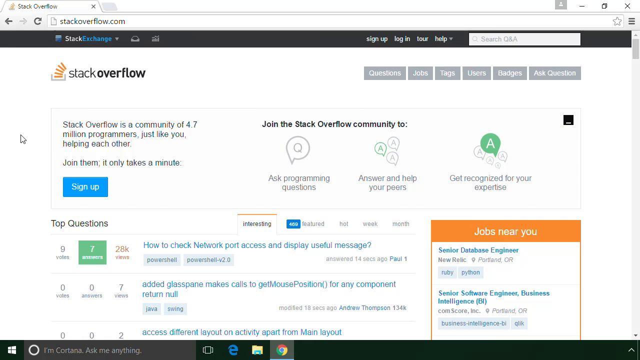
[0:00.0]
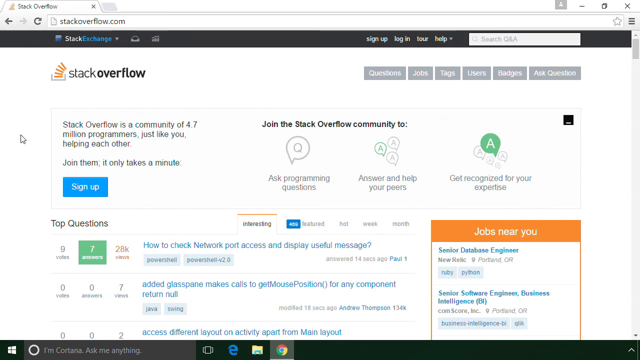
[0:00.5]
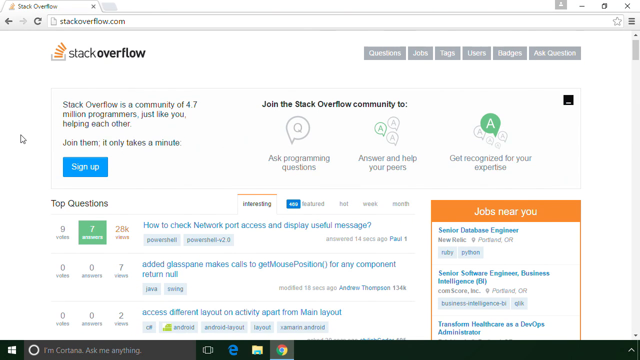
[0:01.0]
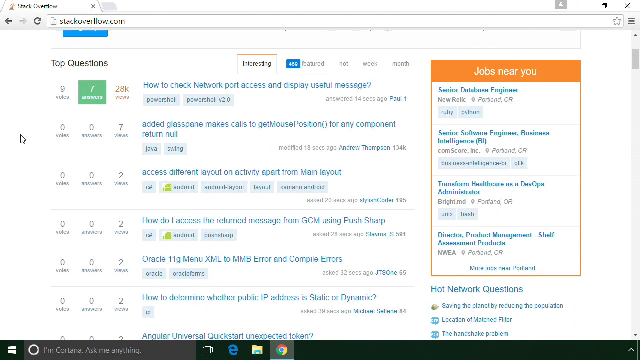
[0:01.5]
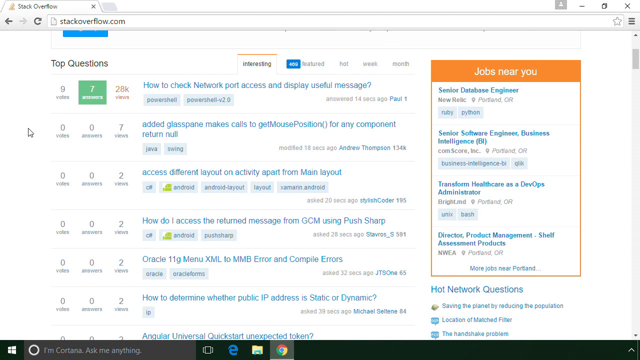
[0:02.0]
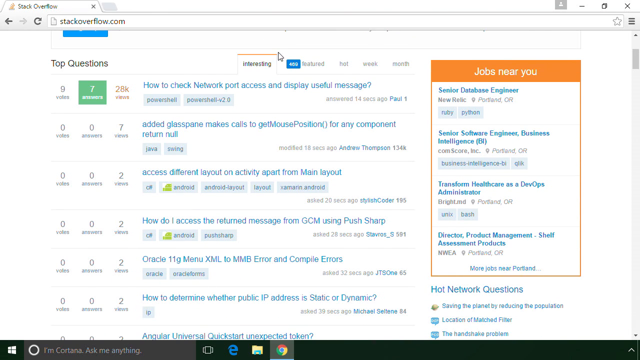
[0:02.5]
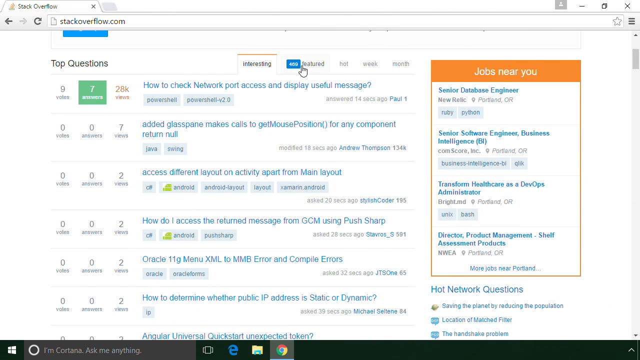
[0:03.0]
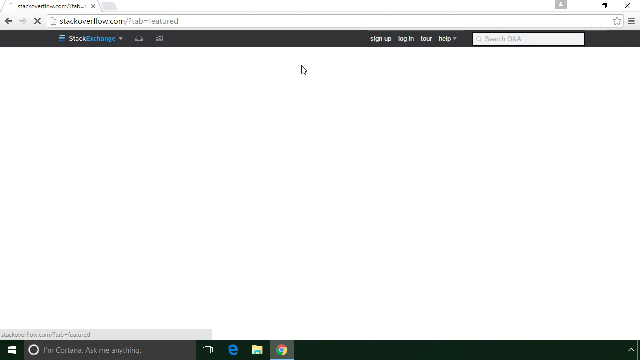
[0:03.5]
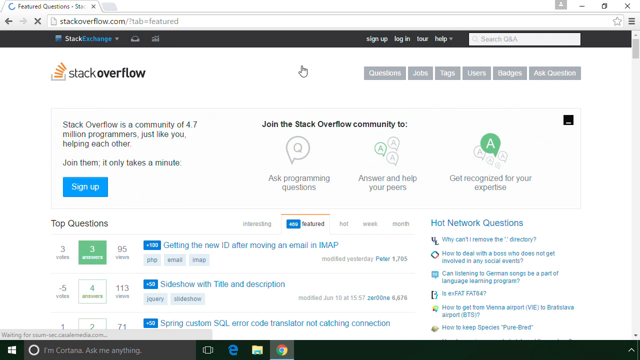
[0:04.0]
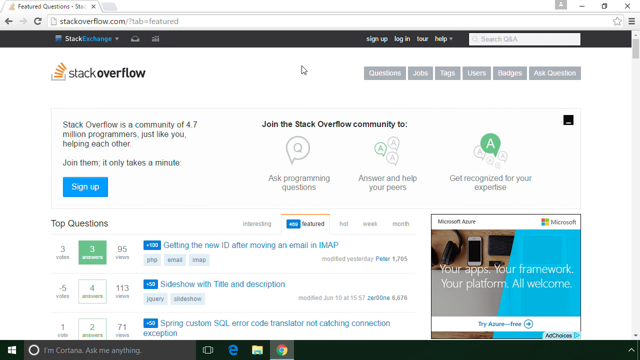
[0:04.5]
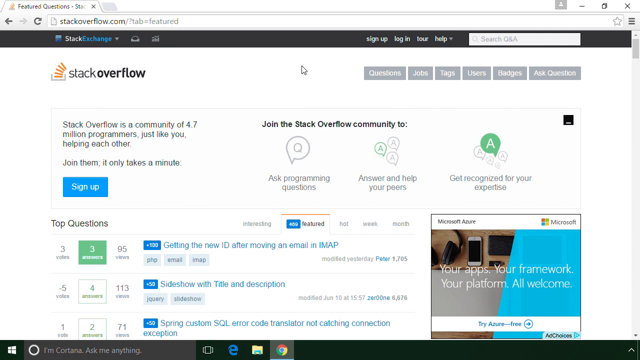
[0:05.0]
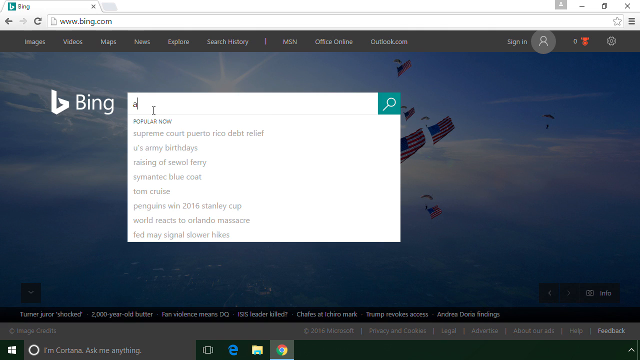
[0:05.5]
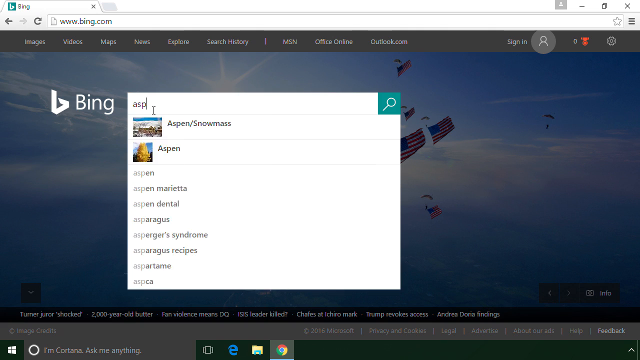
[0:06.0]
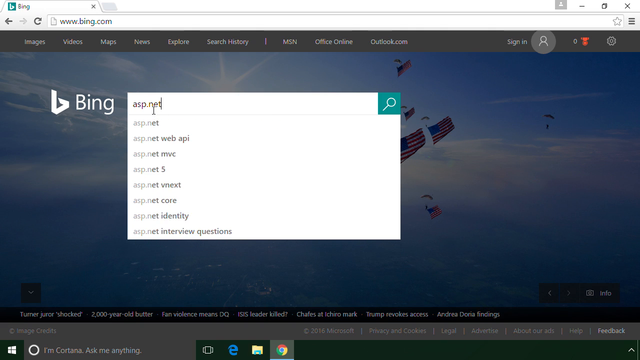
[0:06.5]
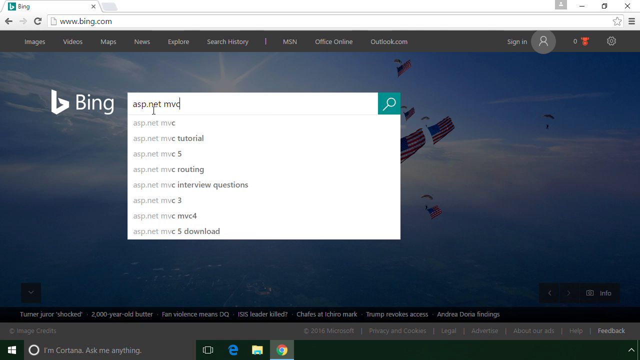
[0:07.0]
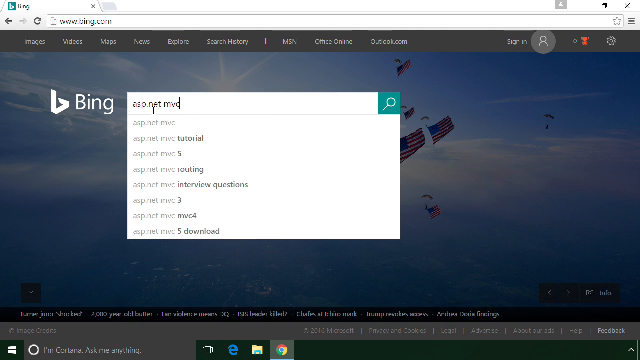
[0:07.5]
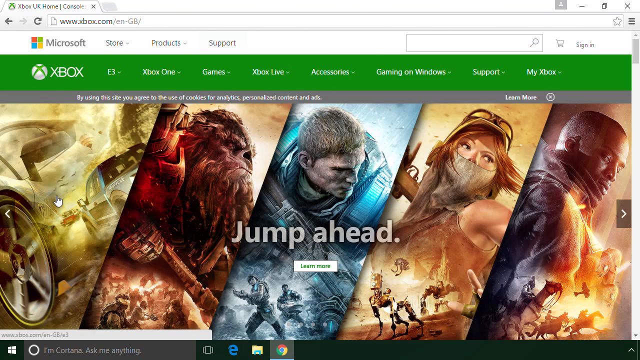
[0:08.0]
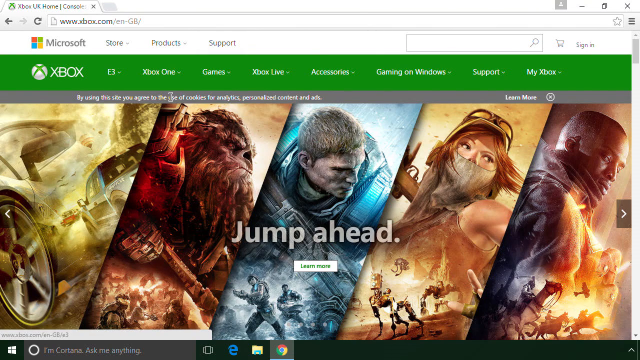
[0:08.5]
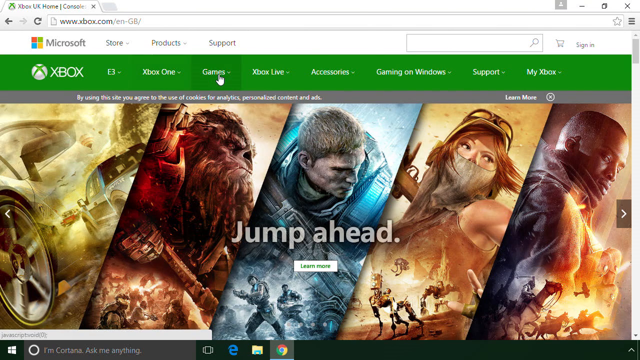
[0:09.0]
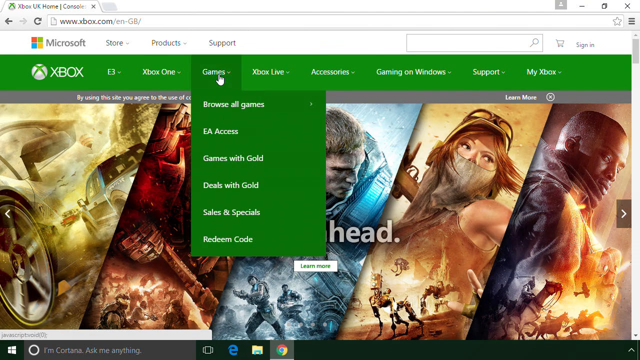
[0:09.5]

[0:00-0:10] The video concerns a platform called Stackflow Overflow. A search is typed into Bing, leading to the site, and a sign-up step is shown. The page scrolls, and there is a "jobs near you" section. The view then goes to a page with Bing again, where the search is typed once more, and then to games. The Stackflow Overflow / Stack Exchange site is shown, with an invitation to join the Stackflow Overflow community.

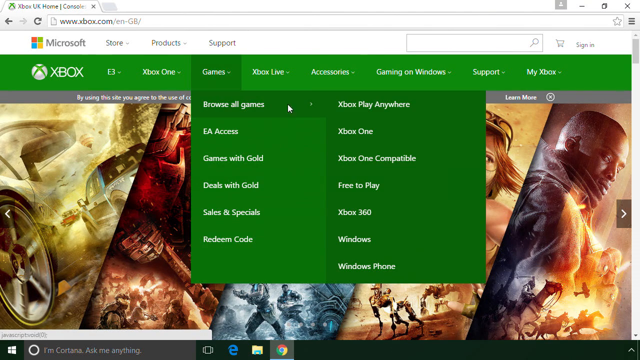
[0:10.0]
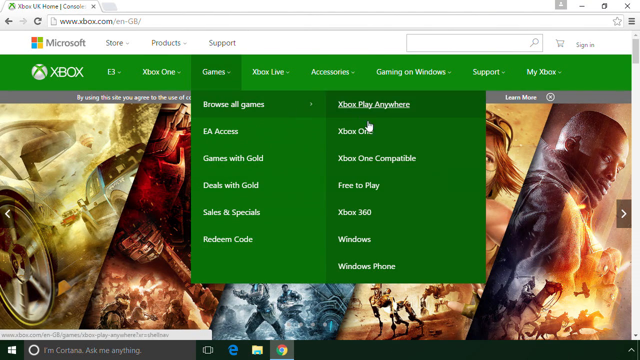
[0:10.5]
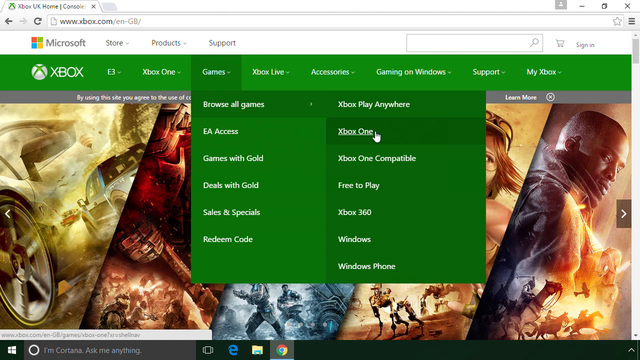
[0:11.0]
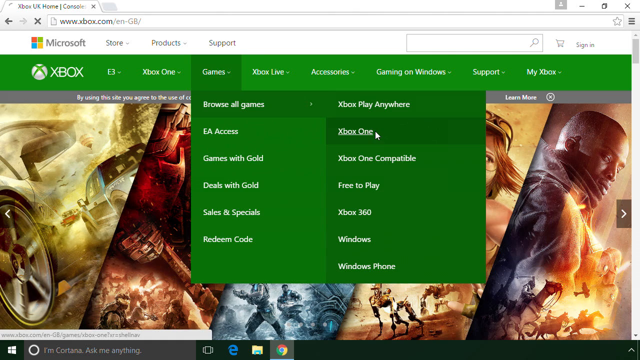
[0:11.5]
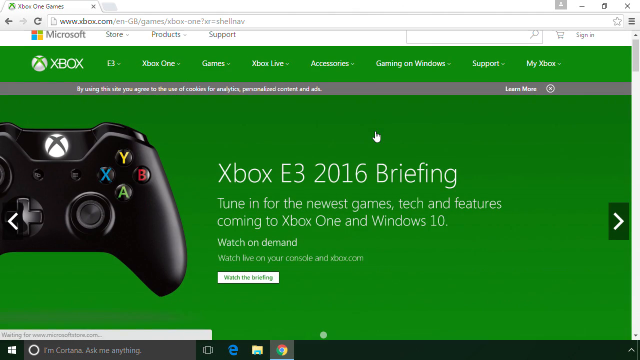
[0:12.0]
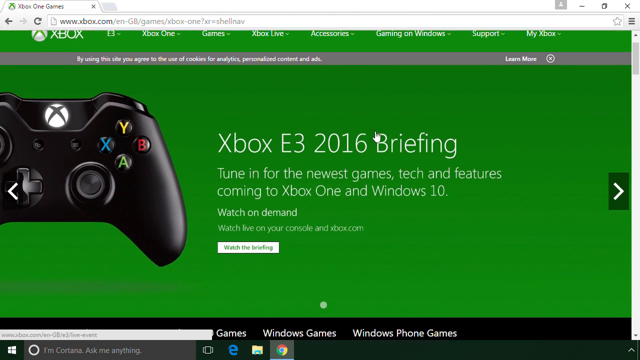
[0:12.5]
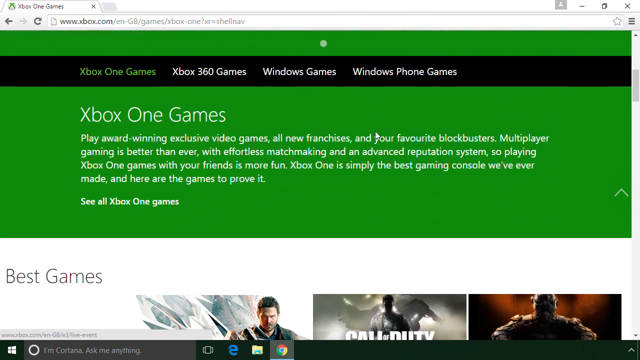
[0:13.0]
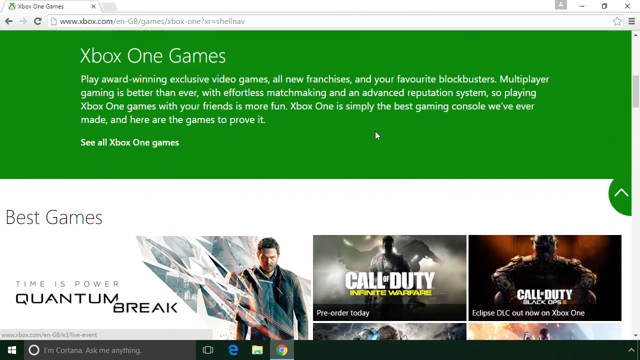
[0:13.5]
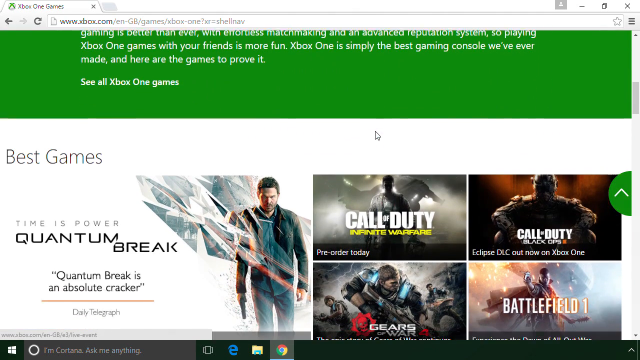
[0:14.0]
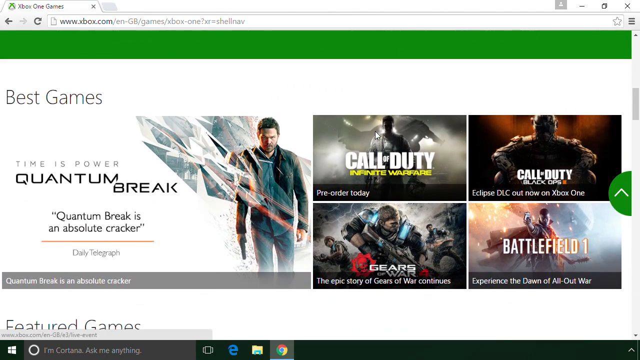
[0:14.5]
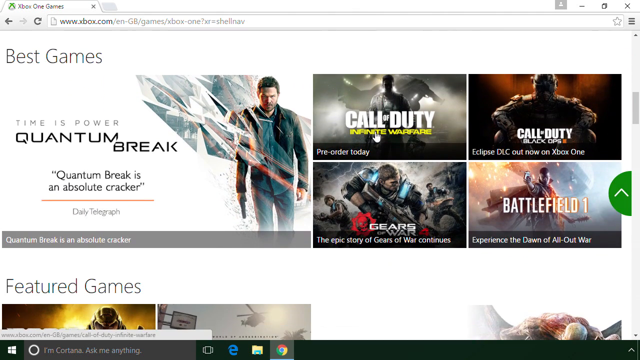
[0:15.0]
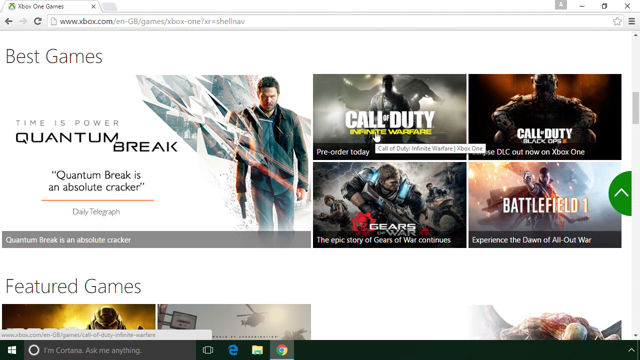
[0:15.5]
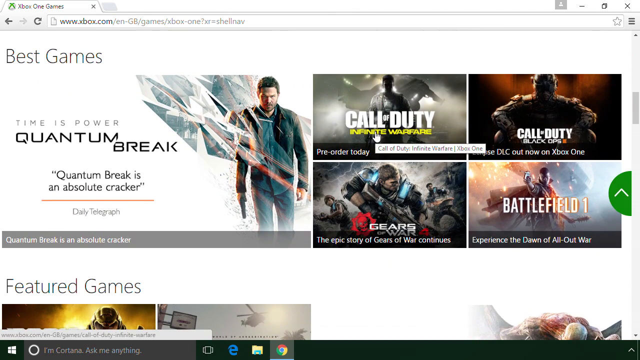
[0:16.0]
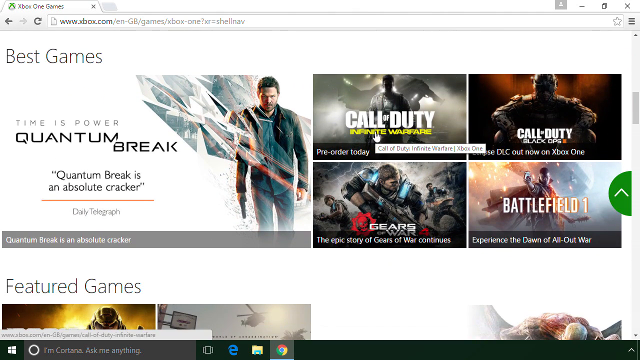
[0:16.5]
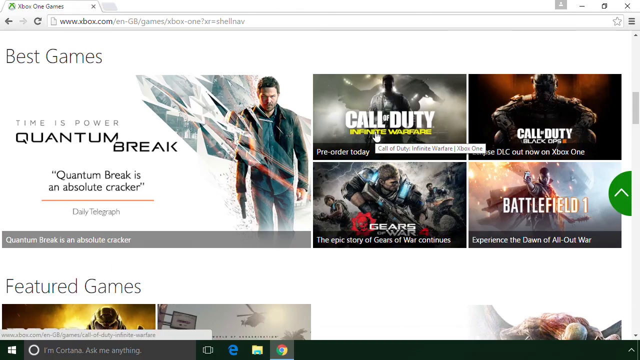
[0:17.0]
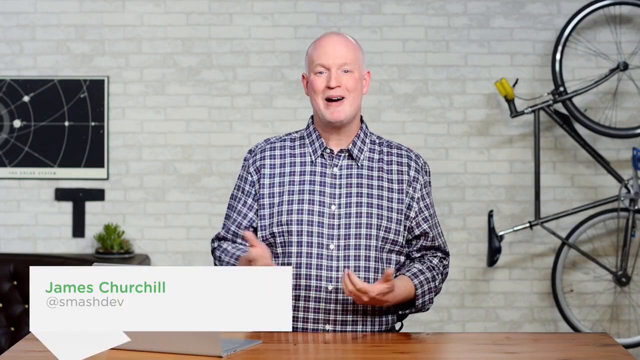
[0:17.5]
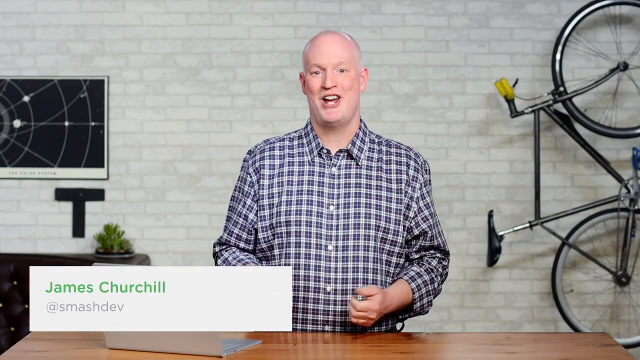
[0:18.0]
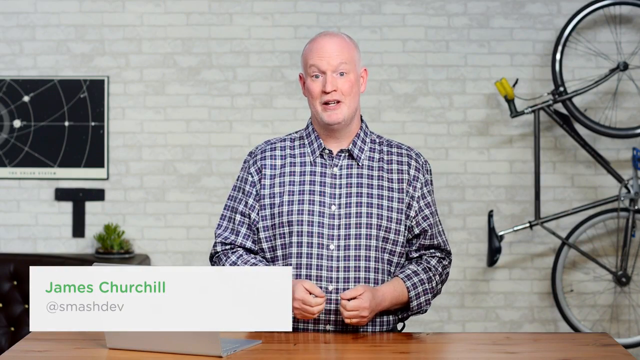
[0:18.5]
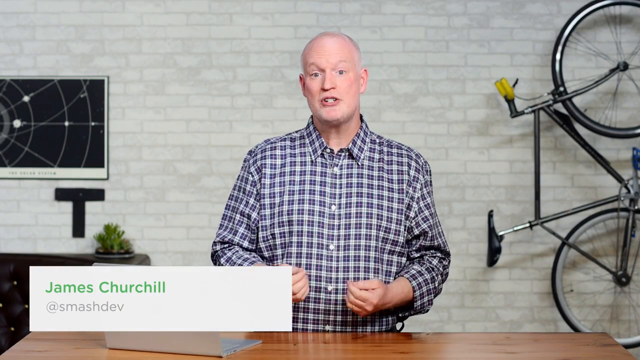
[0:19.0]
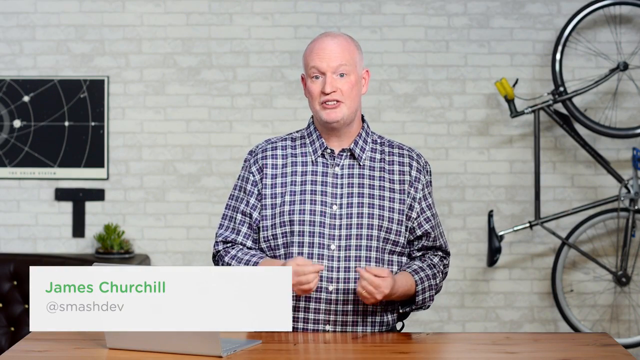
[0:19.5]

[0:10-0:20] An Xbox page appears, and Xbox One is selected. The page scrolls down to show different types of games, including Quantum Break and Call of Duty, along with some featured games. The Xbox options include browsing games, games with code, sales and specials, Xbox One, Xbox One compatible, and free to play. A man named James J Show is explaining how it is done. Xbox One is clicked, and then Call of Duty is clicked.